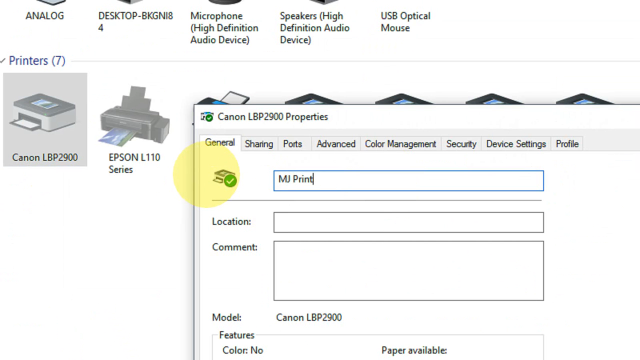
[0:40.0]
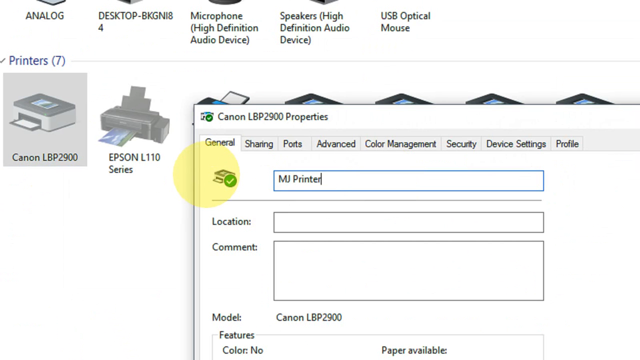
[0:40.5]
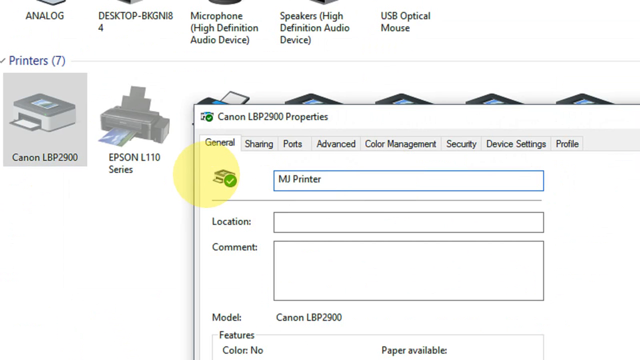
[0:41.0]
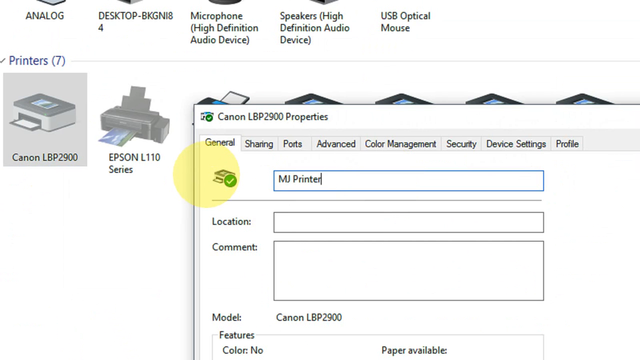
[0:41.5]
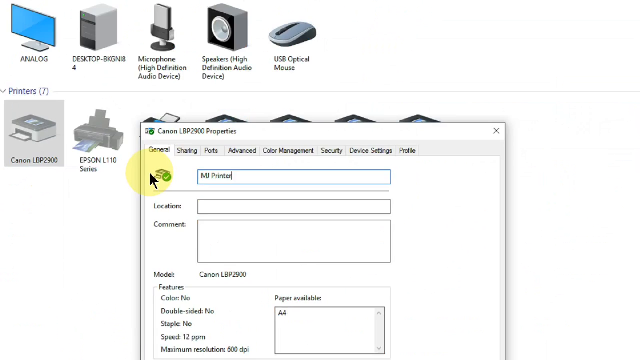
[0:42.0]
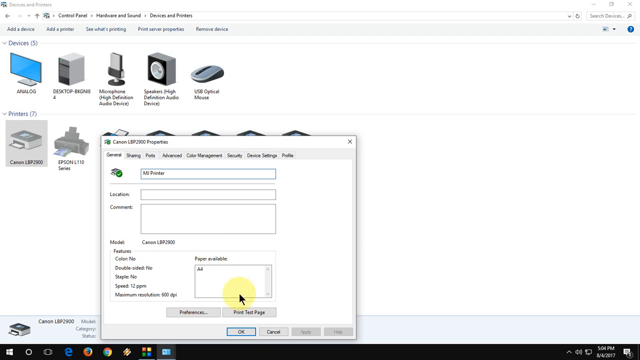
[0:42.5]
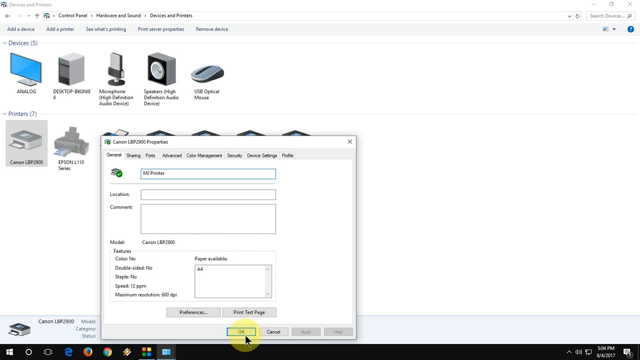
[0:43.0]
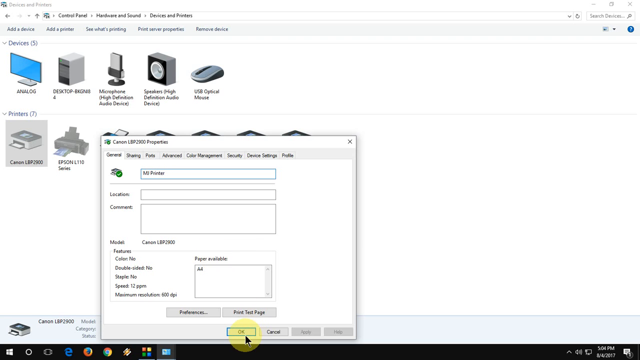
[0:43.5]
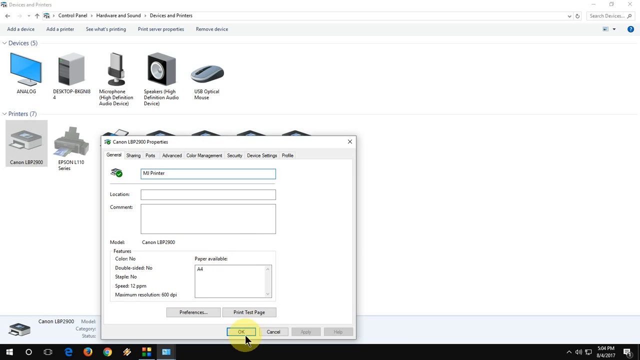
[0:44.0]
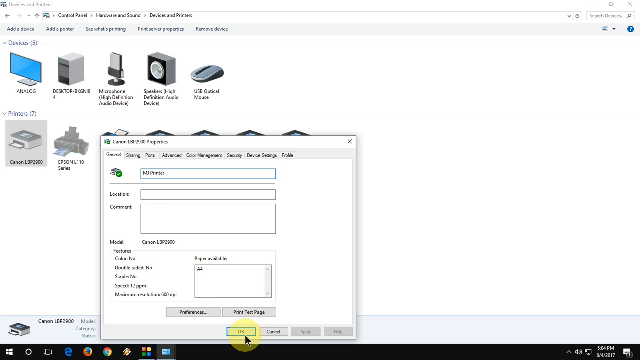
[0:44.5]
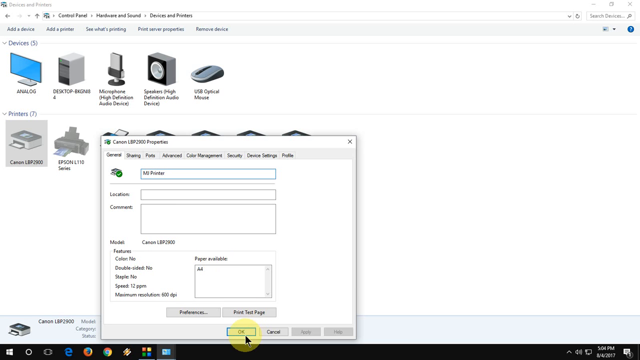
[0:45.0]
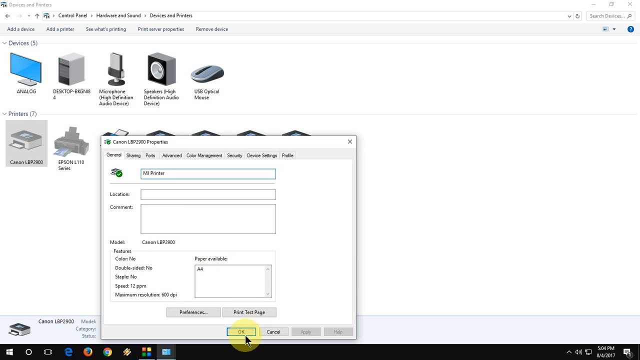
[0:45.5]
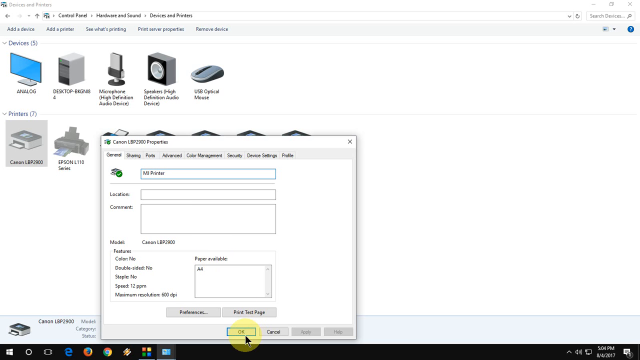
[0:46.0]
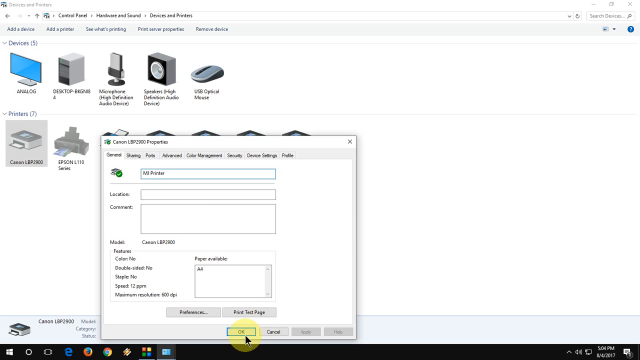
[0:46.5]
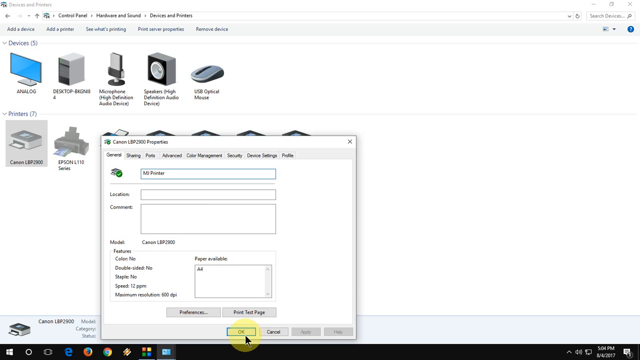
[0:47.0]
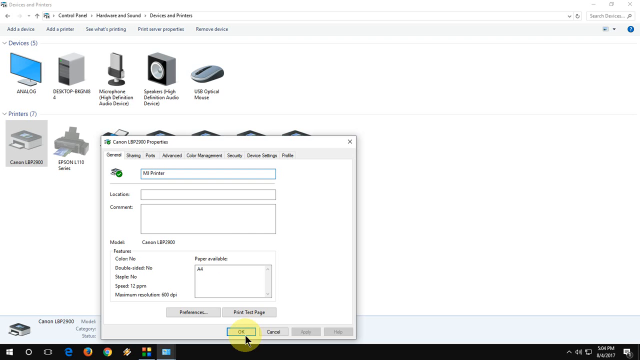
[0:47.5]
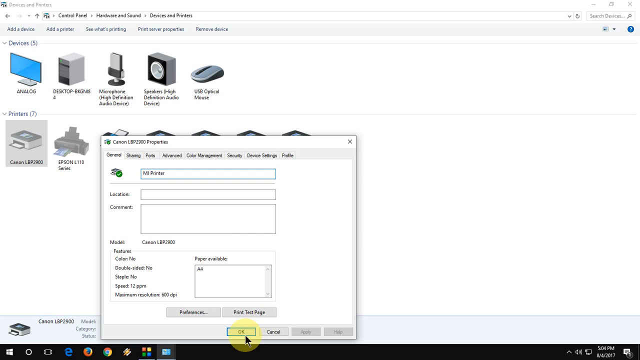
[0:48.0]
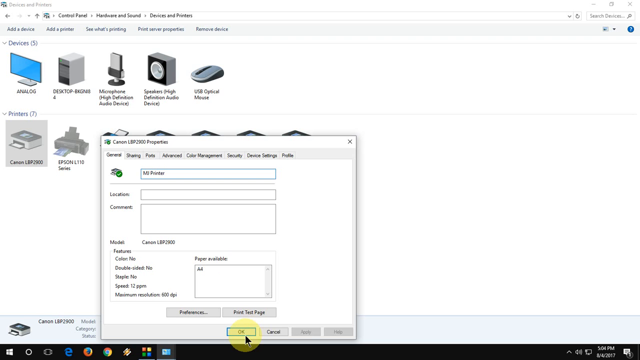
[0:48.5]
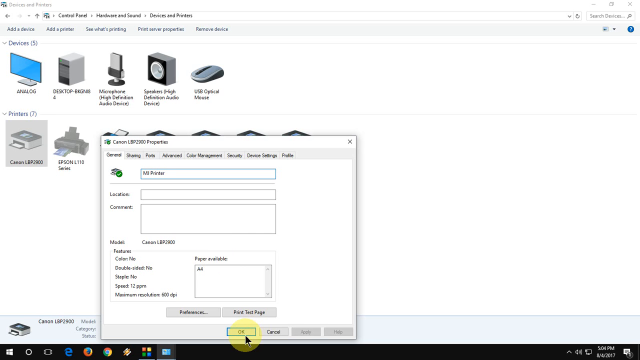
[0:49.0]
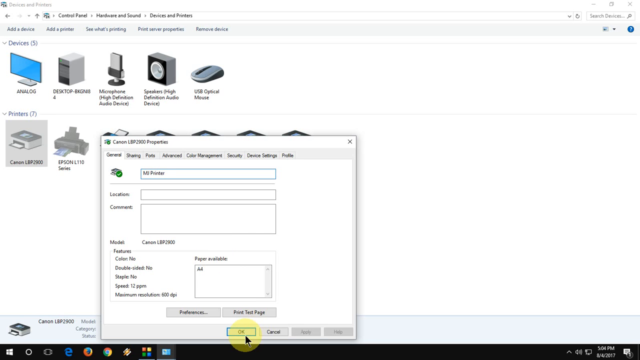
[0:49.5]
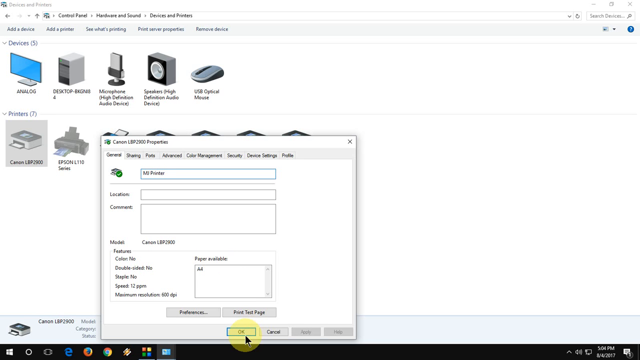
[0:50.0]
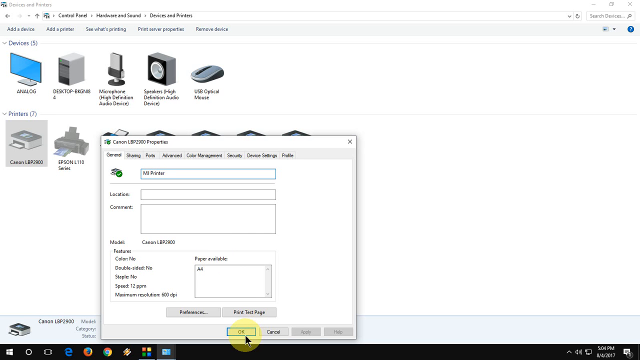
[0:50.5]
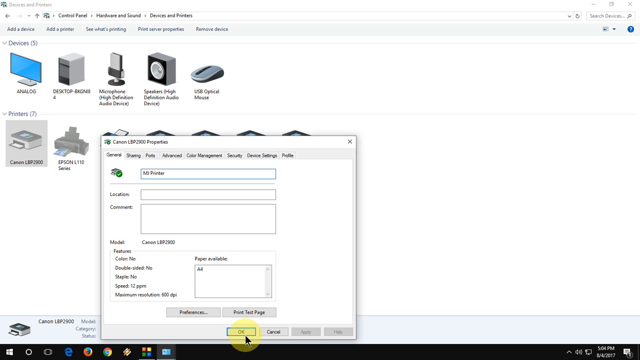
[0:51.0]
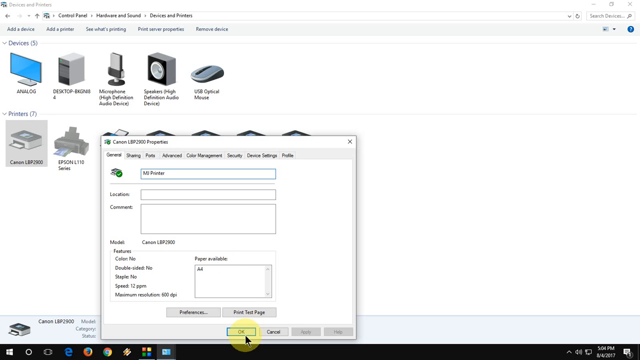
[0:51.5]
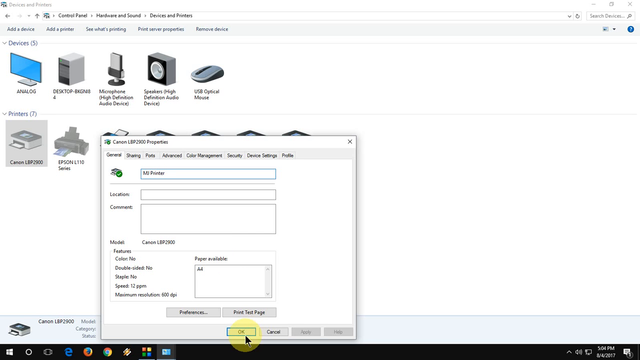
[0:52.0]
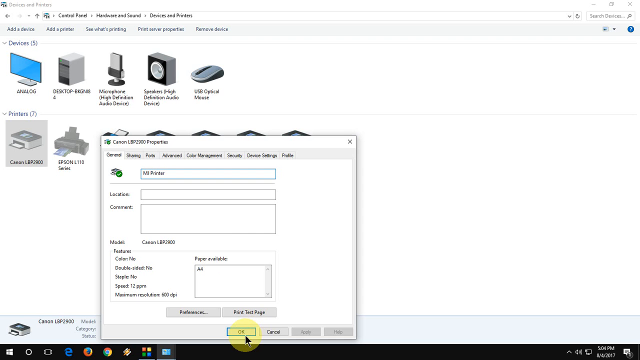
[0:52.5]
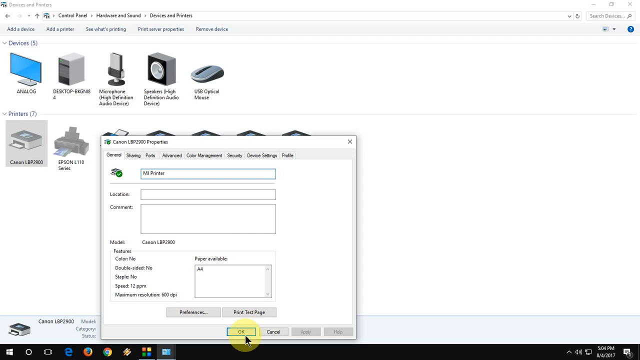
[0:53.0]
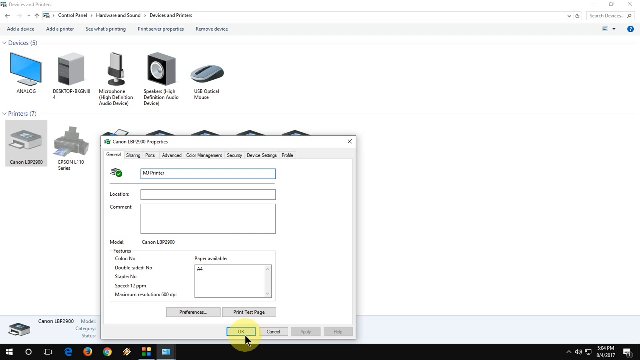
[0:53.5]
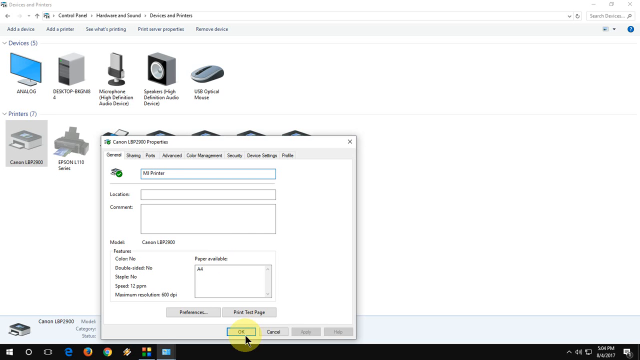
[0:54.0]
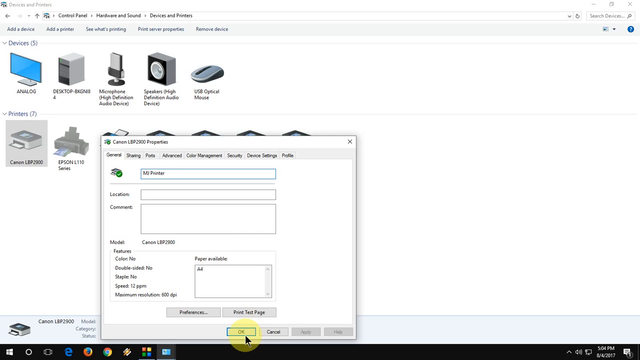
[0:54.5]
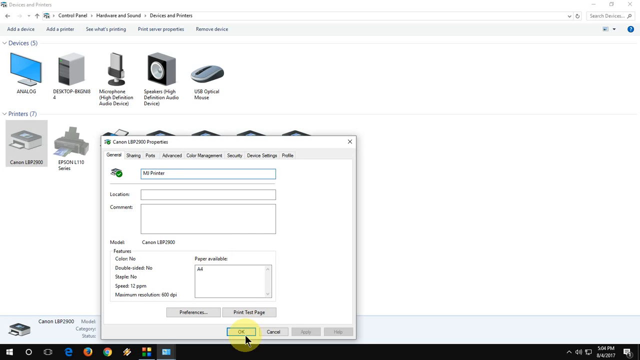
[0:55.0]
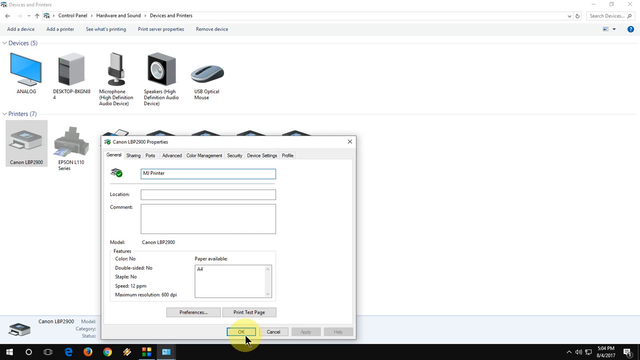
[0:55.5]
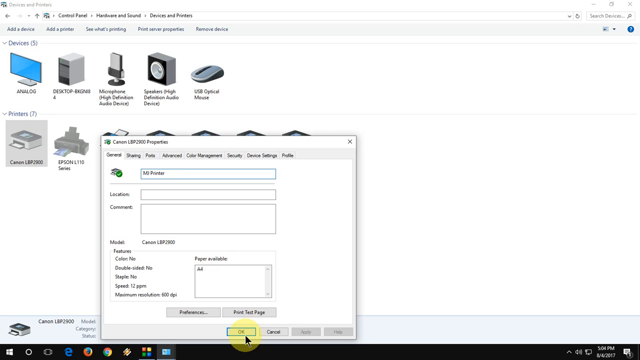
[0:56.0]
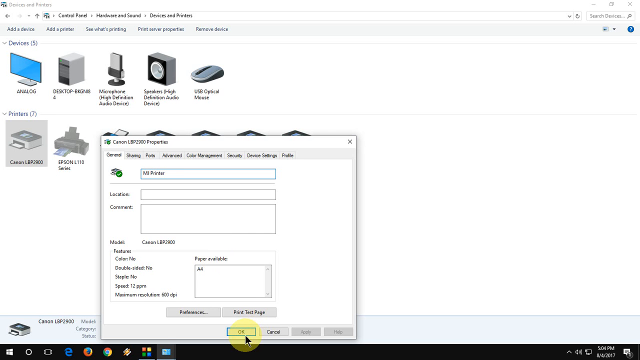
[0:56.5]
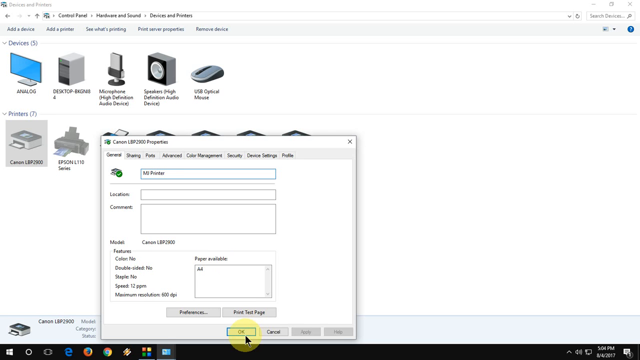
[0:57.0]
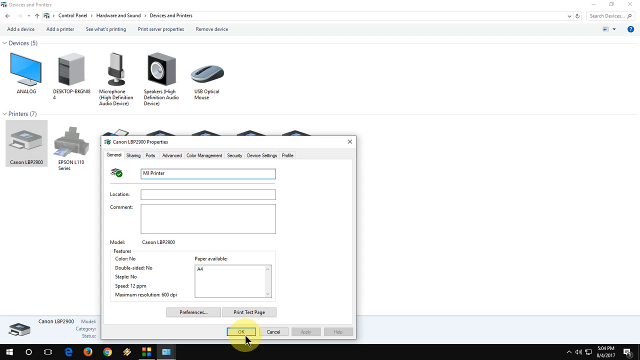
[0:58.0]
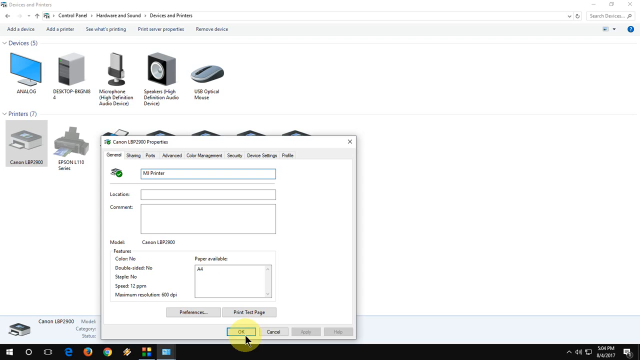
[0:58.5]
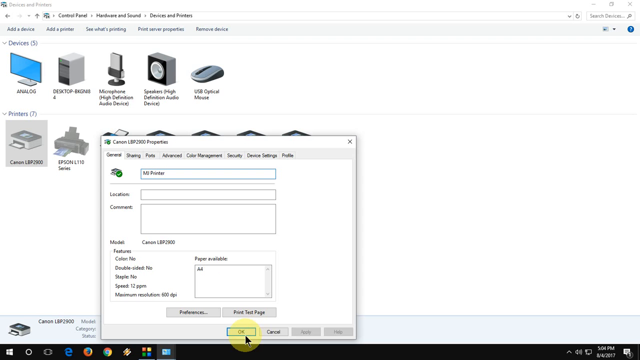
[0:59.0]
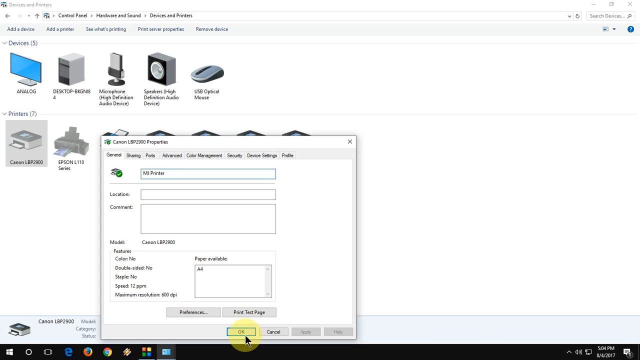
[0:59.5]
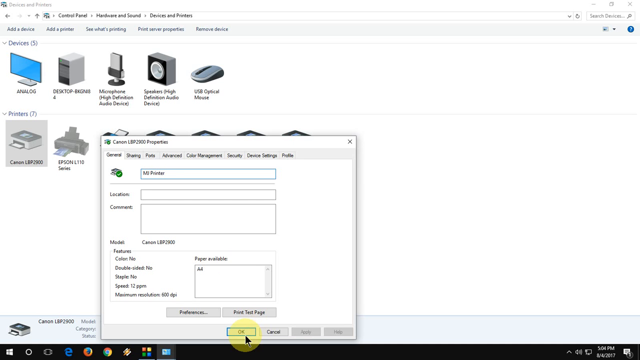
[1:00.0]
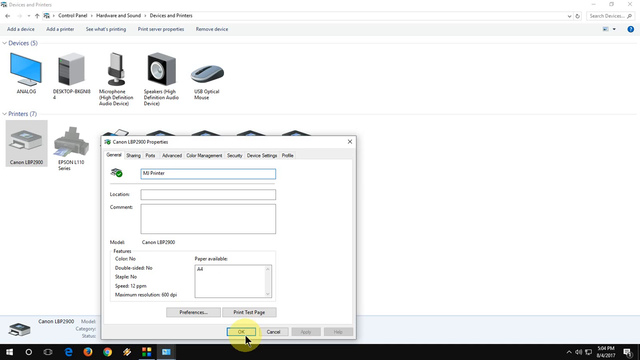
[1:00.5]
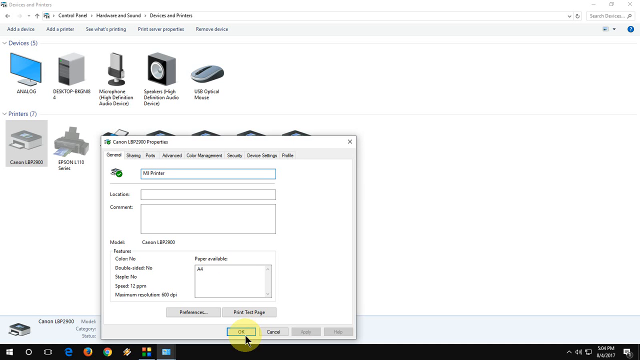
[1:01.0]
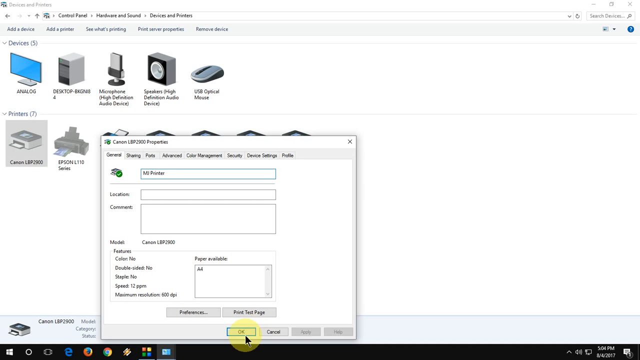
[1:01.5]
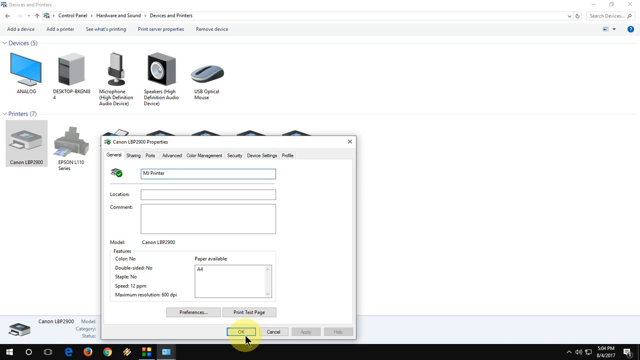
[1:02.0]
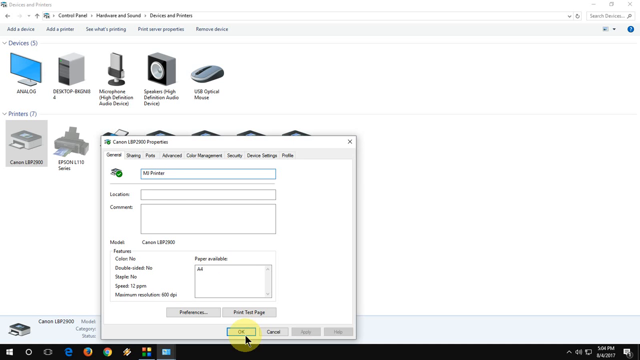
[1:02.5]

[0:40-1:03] The person continues setting up the Canon LPB 2900 printer in the properties window, which shows the general, sharing, ports, advanced, color management, security, device settings and profile tabs. The type of the printer is marked with a green tick, and location and comment appear on the same page. As the person types "MJ printers", a square pops up, with nothing in it. The page also shows the model of the printer, Canon LPB 2900. The colors stay the same. Different printers are listed on the page, such as the Epson L110 series, along with items like microphone, high-definition audio device, desktop BKG N184, speakers, high-definition audio device, USB optical mouse, and analog. The printers section shows the number seven.